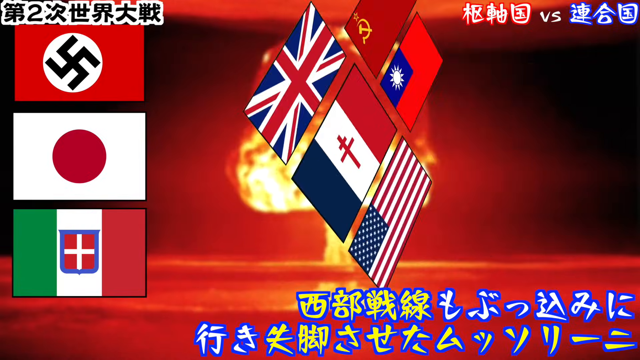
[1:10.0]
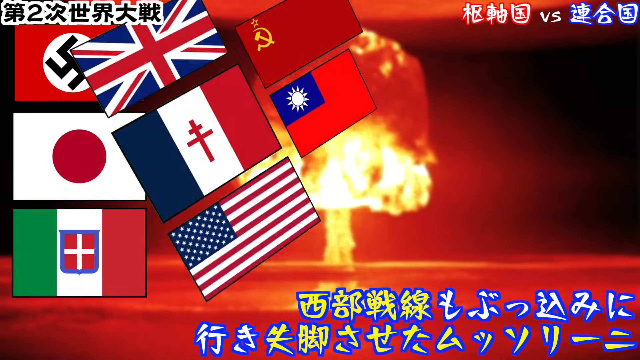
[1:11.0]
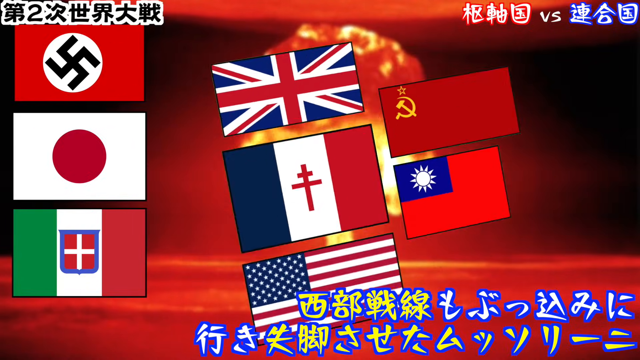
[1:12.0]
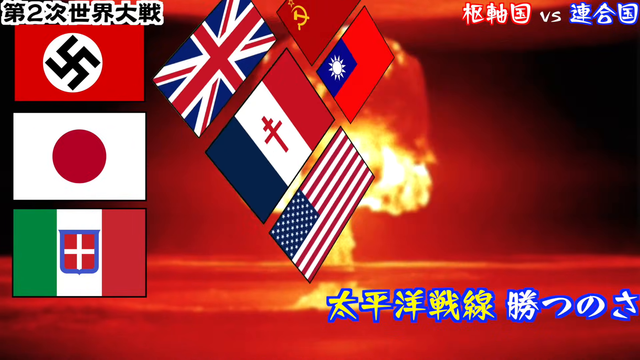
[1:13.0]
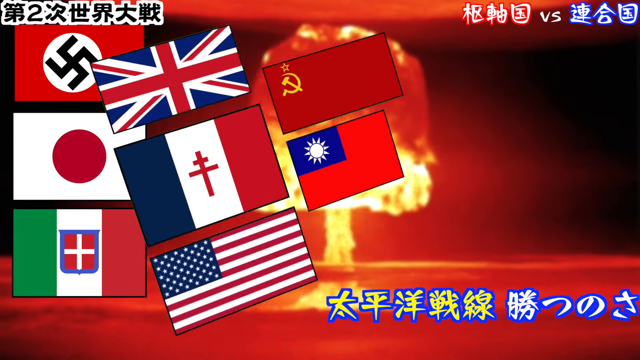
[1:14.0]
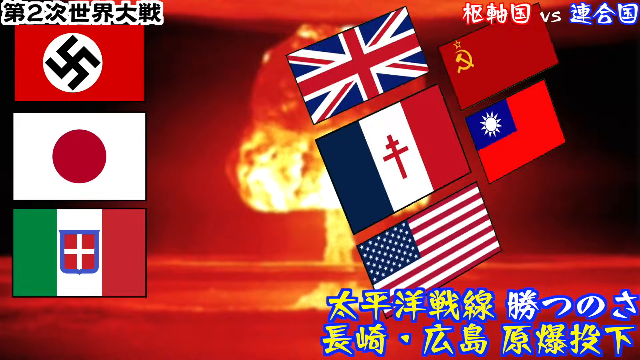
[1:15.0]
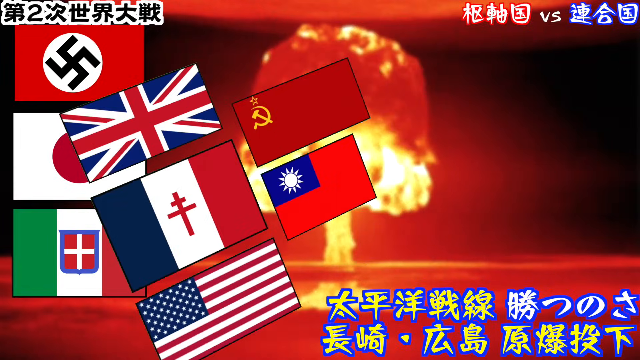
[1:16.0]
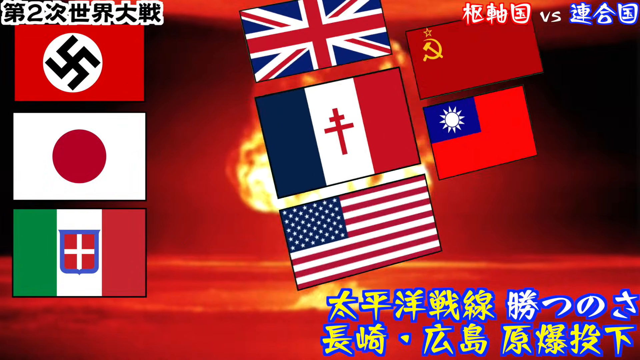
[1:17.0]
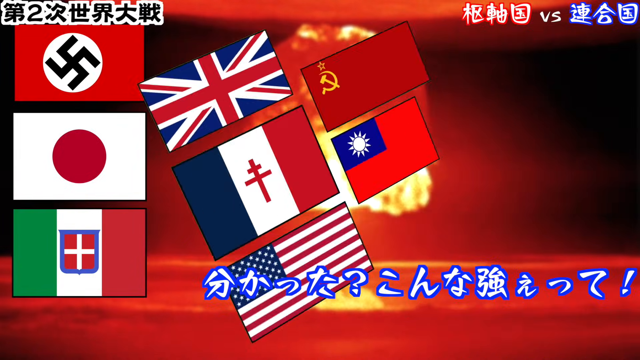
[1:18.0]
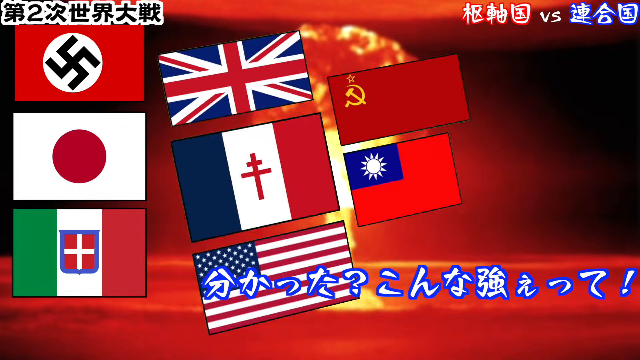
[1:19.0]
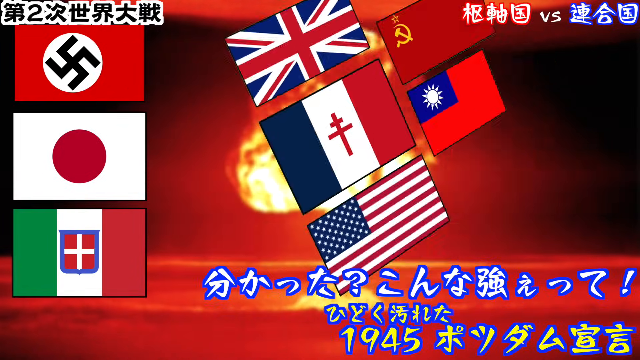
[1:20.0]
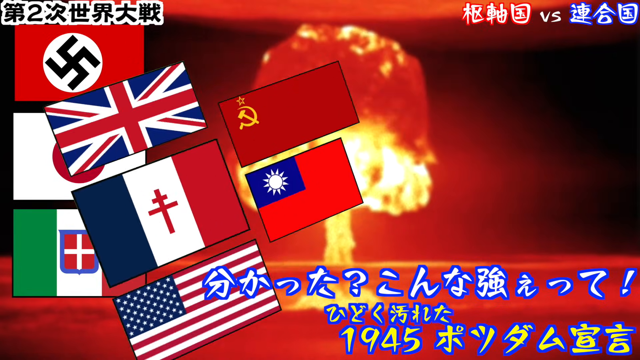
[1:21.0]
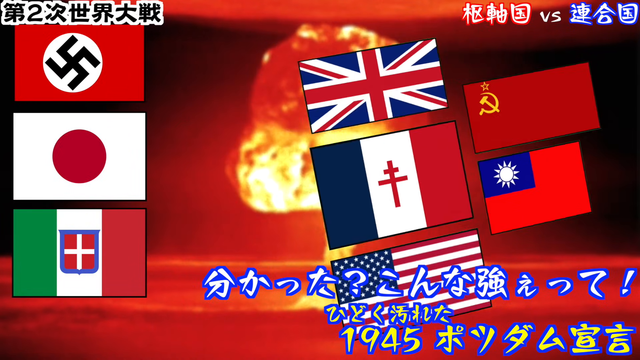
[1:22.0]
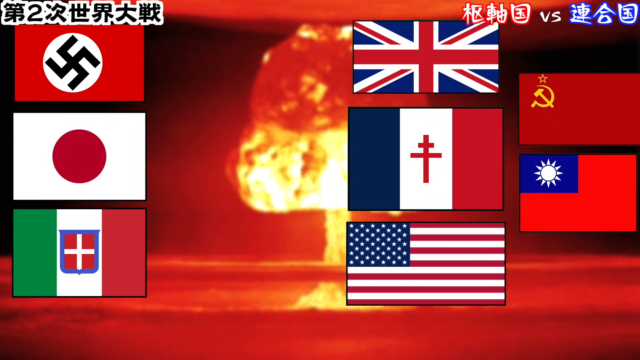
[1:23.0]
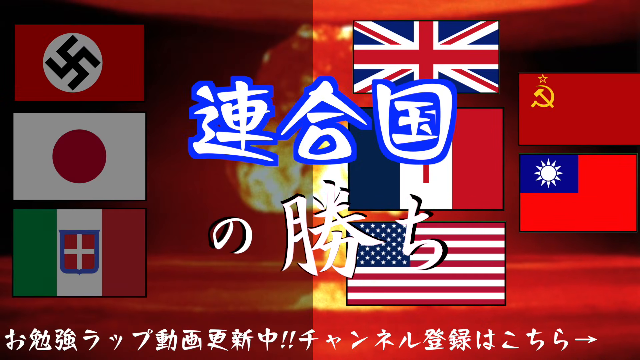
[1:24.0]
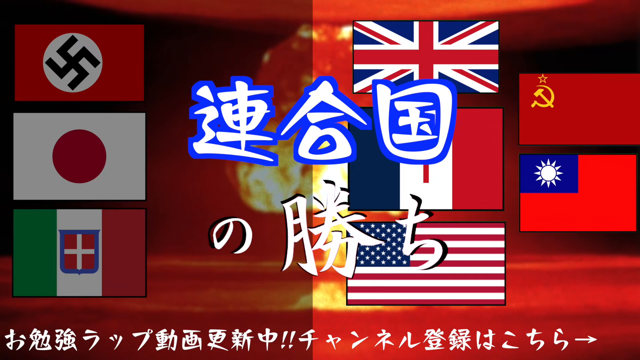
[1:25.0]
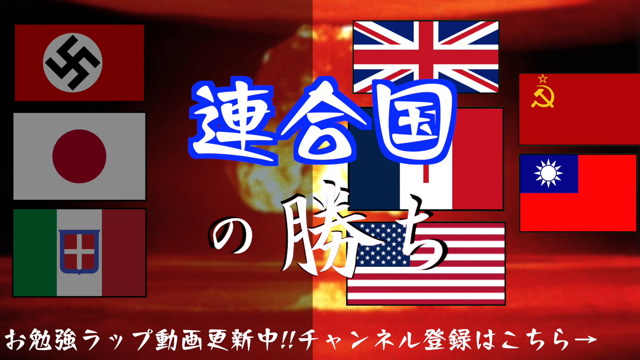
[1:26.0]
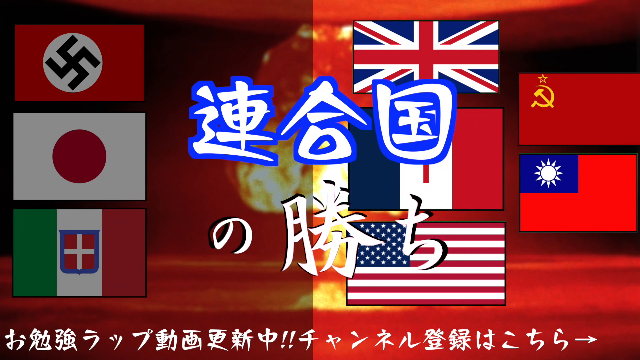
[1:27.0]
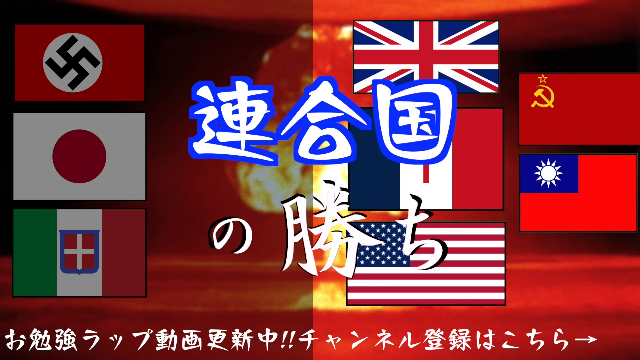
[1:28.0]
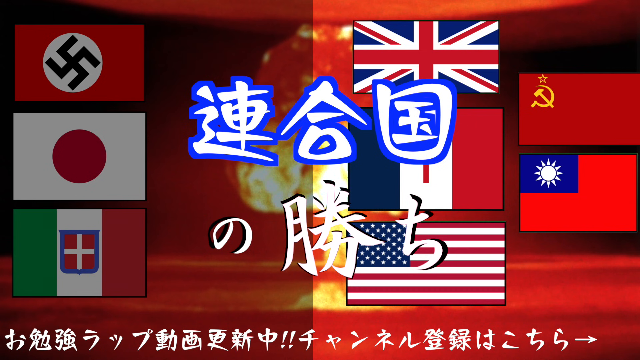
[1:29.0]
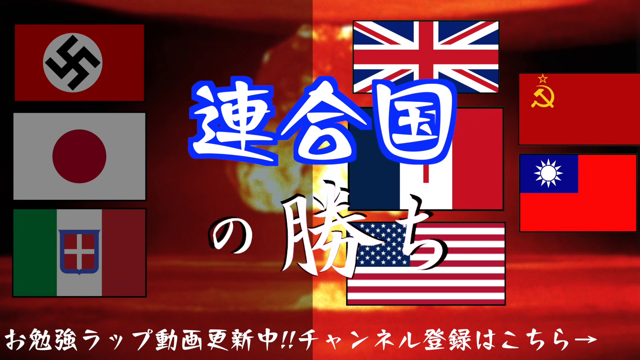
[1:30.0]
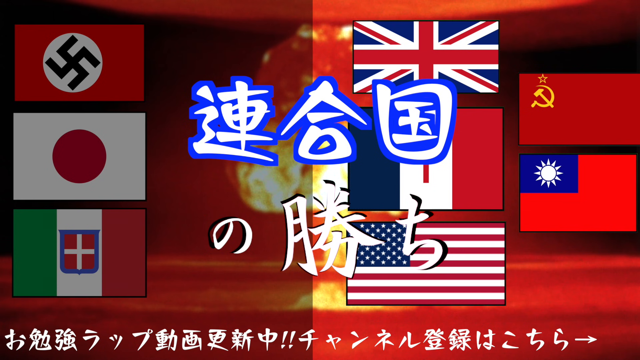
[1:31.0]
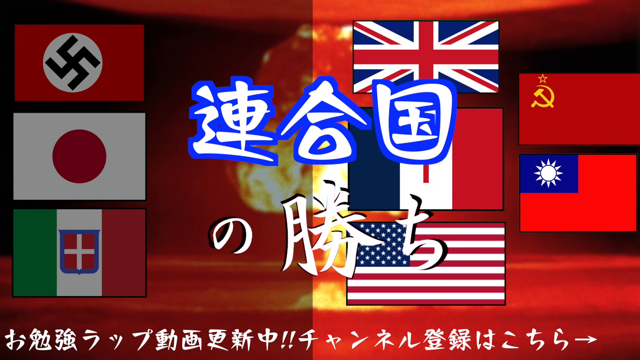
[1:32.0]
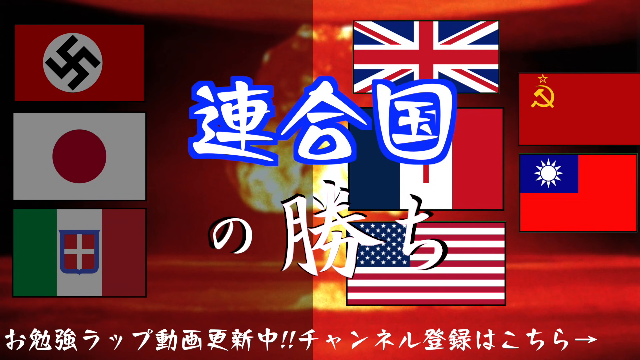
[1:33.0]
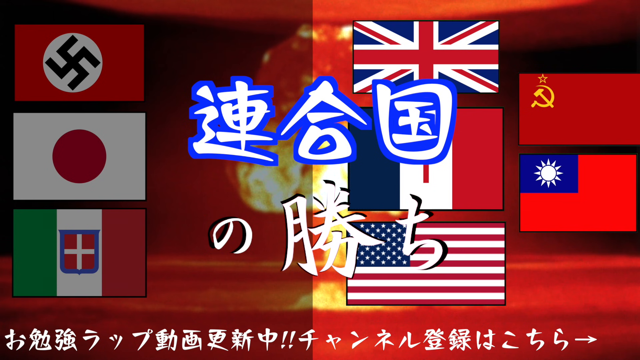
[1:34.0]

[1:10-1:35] The five flags vibrate all together, and afterward they stand on the right side of the frame. Some written information appears in a language whose alphabet looks like Chinese or something related.